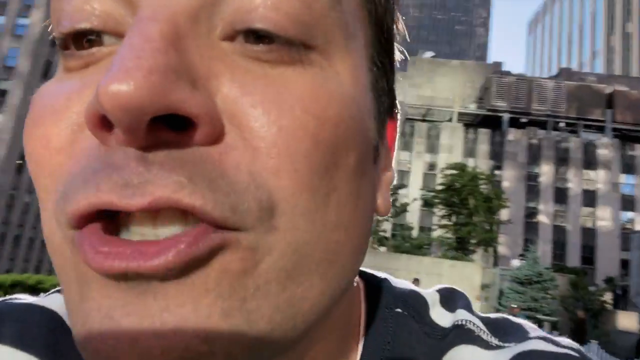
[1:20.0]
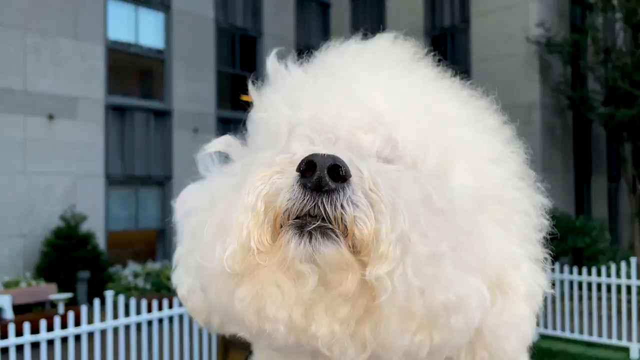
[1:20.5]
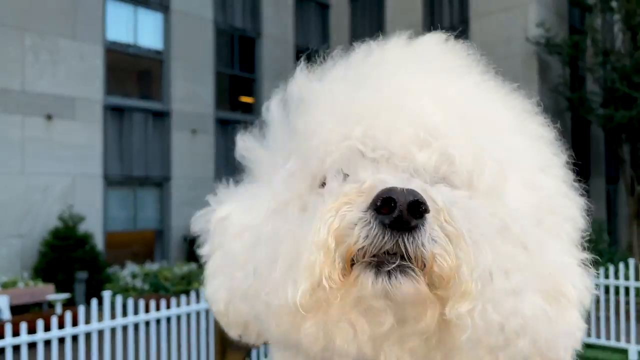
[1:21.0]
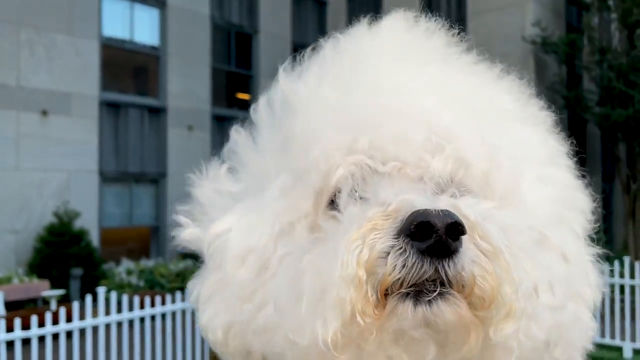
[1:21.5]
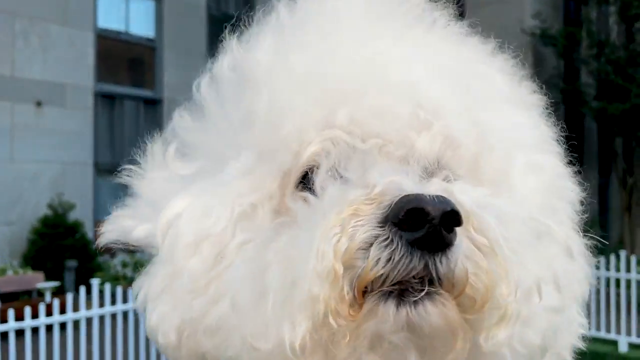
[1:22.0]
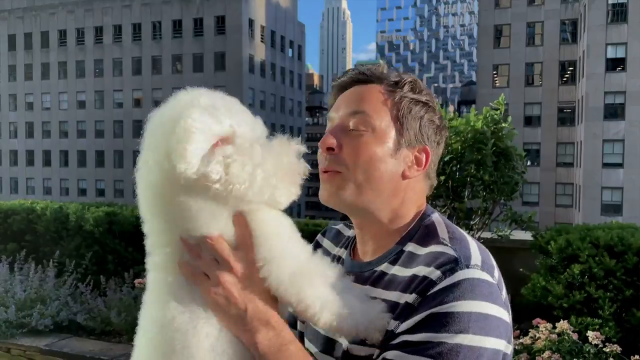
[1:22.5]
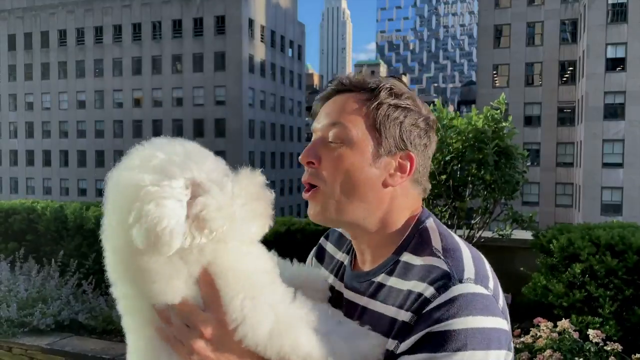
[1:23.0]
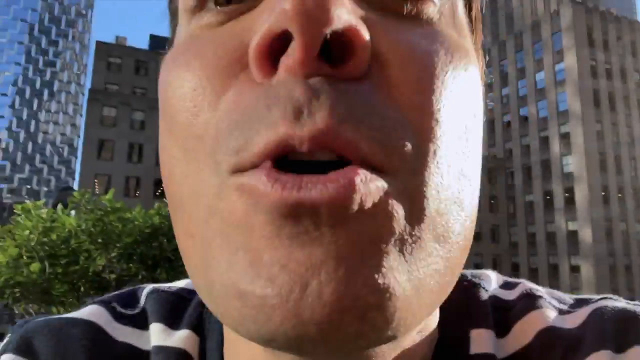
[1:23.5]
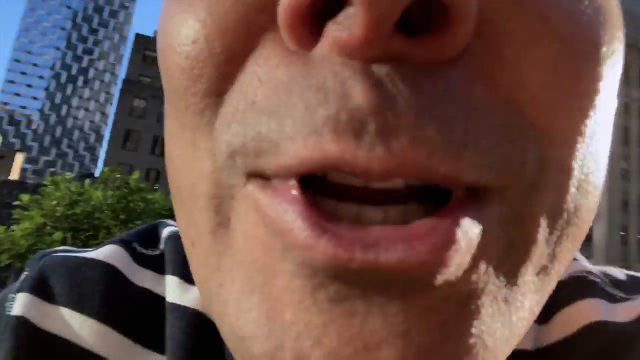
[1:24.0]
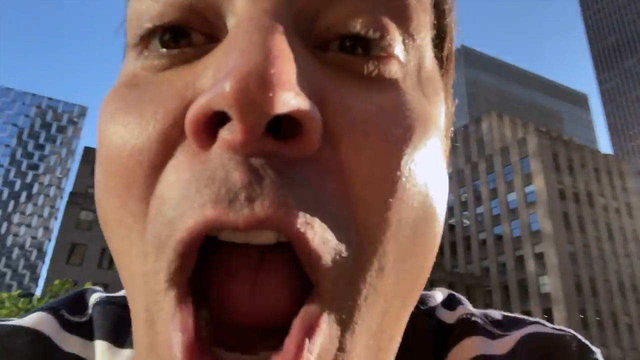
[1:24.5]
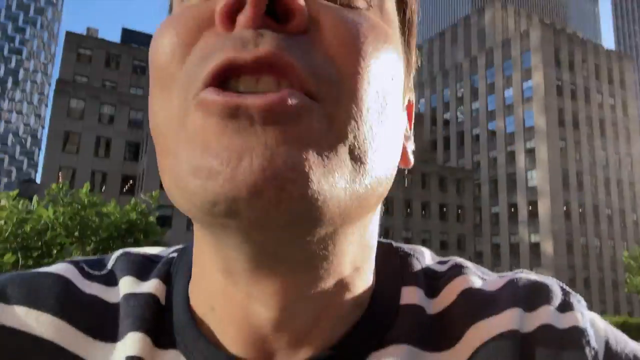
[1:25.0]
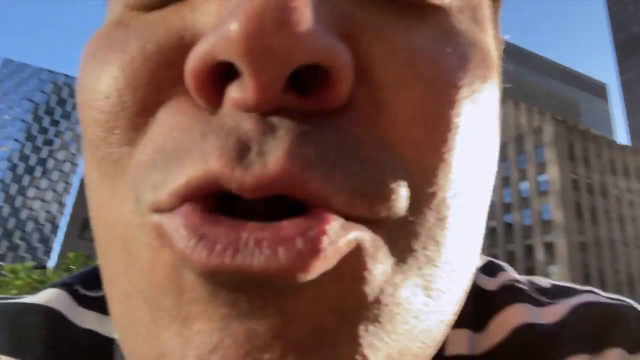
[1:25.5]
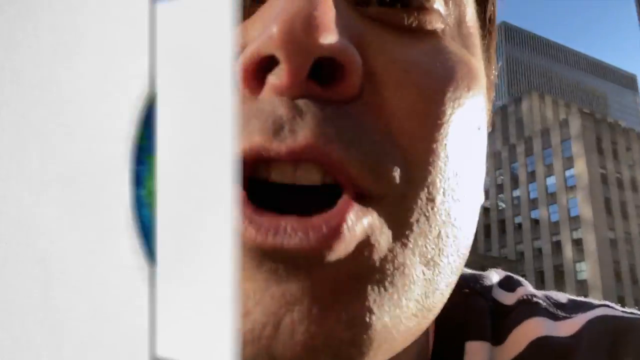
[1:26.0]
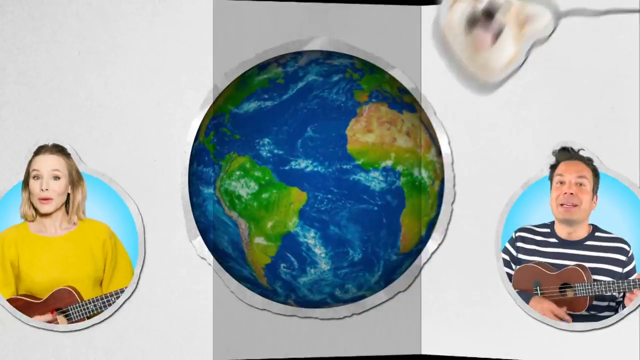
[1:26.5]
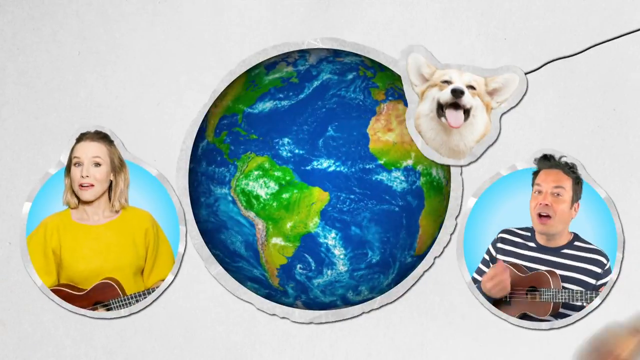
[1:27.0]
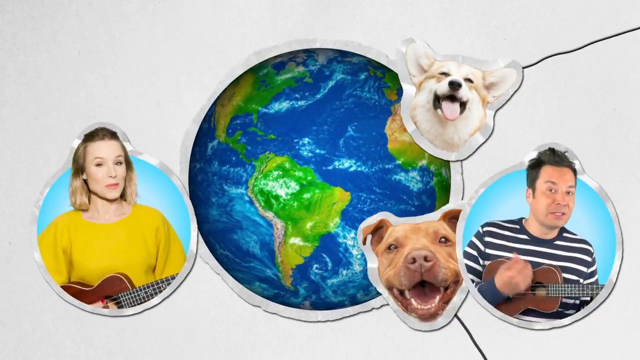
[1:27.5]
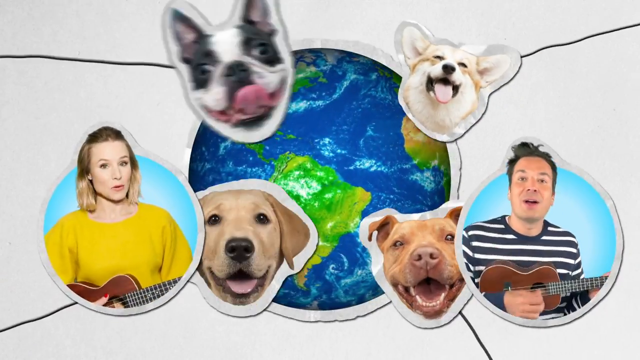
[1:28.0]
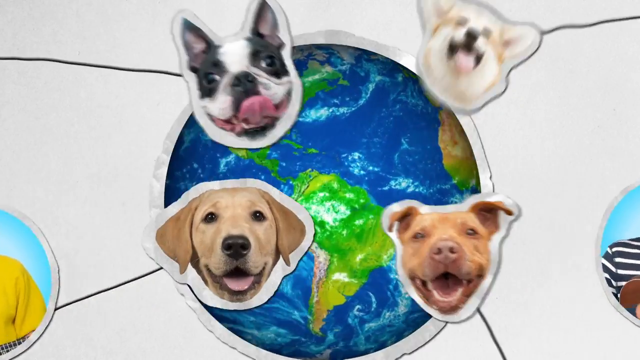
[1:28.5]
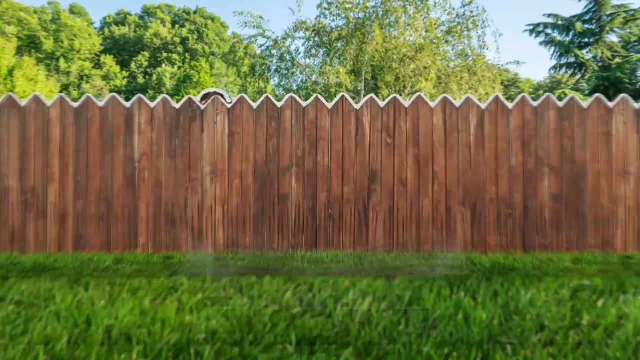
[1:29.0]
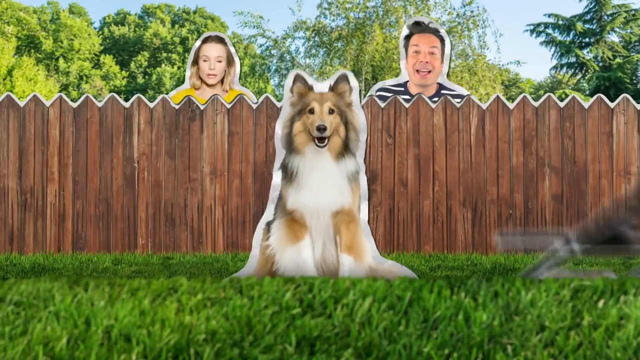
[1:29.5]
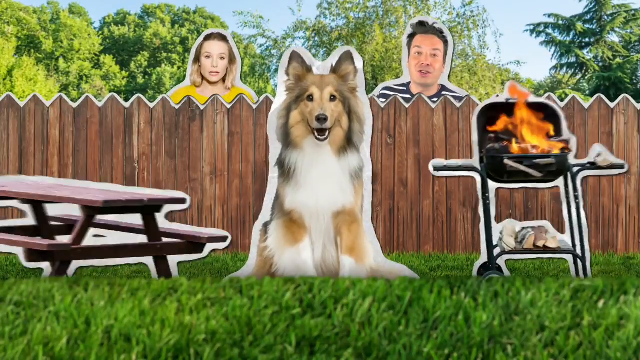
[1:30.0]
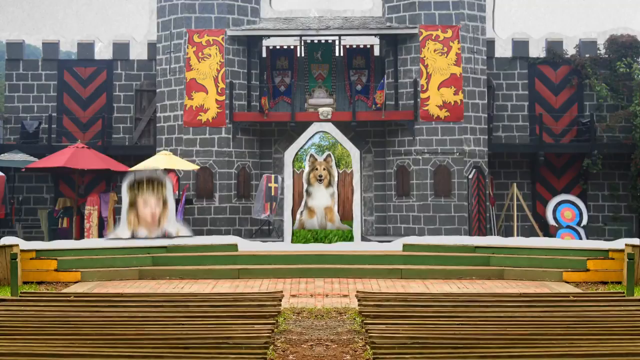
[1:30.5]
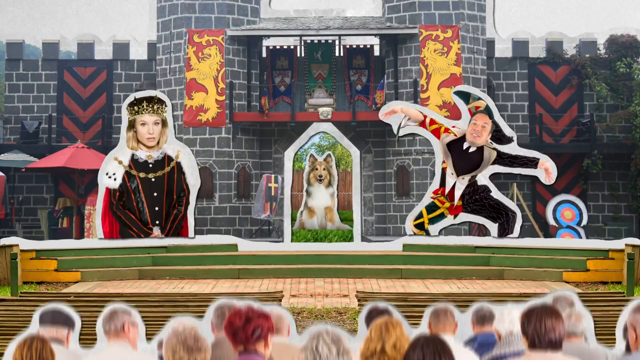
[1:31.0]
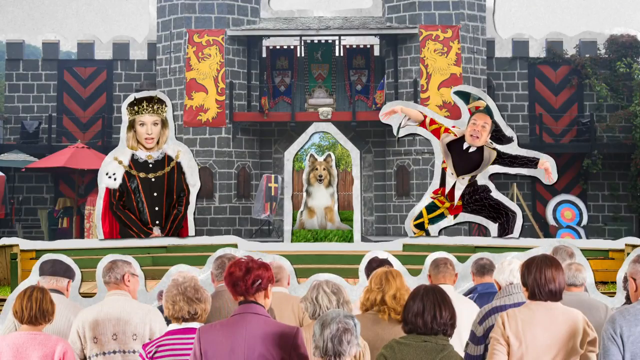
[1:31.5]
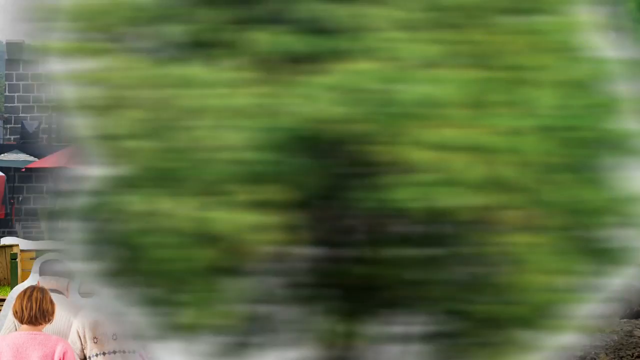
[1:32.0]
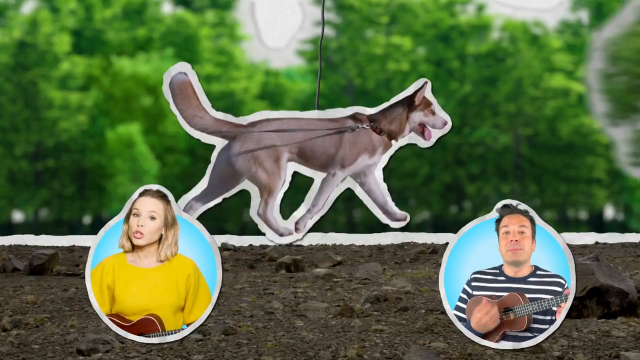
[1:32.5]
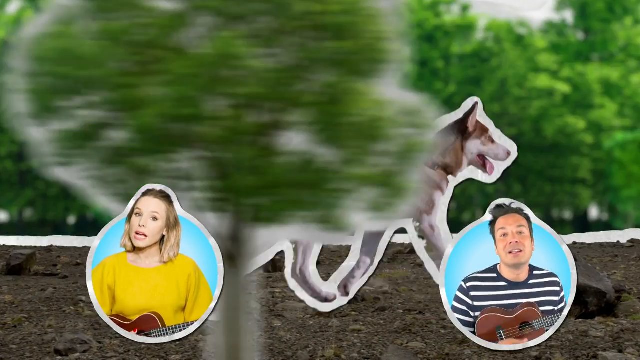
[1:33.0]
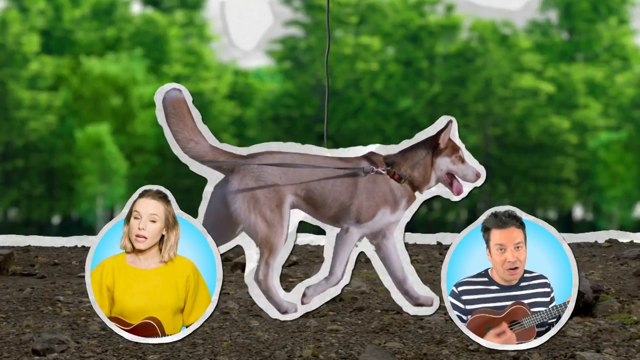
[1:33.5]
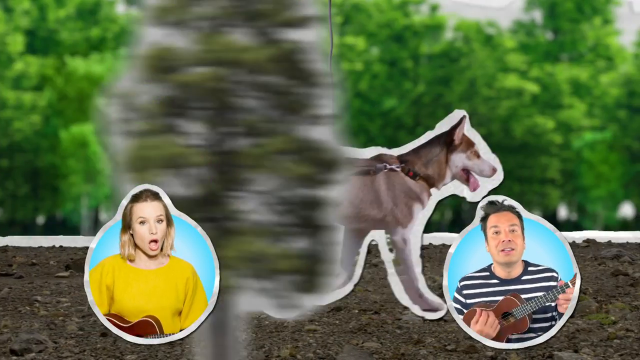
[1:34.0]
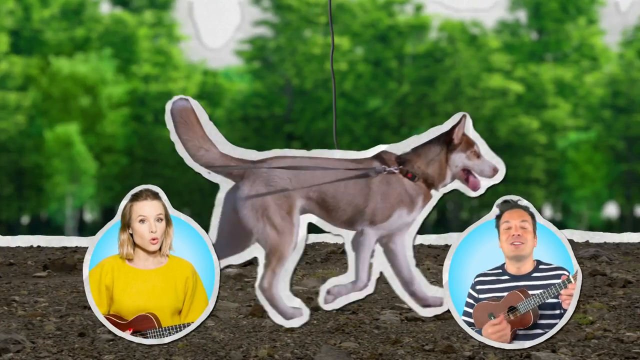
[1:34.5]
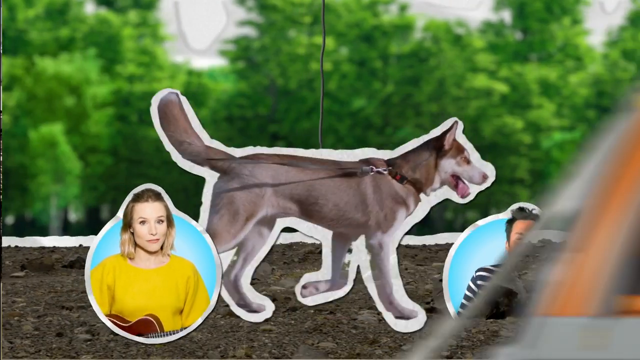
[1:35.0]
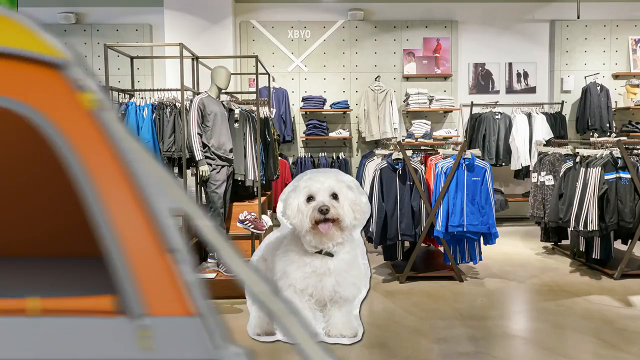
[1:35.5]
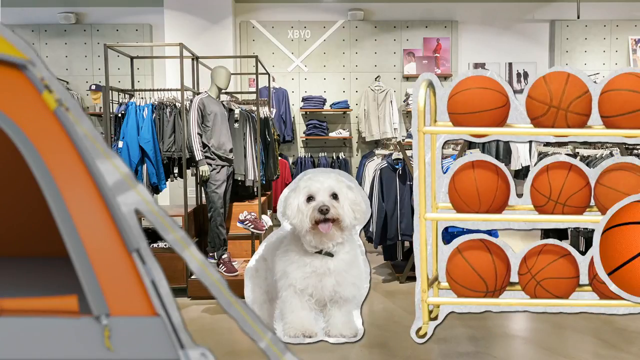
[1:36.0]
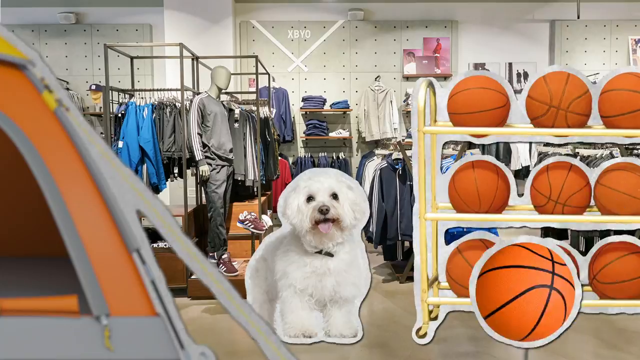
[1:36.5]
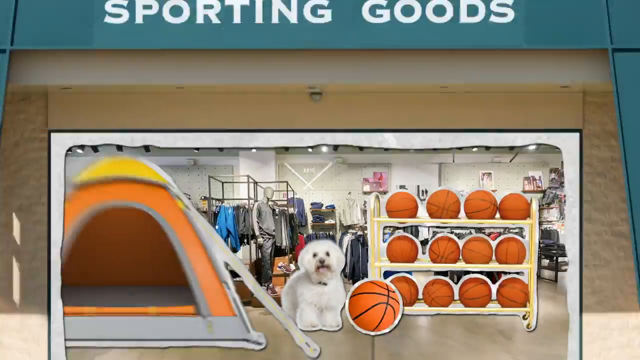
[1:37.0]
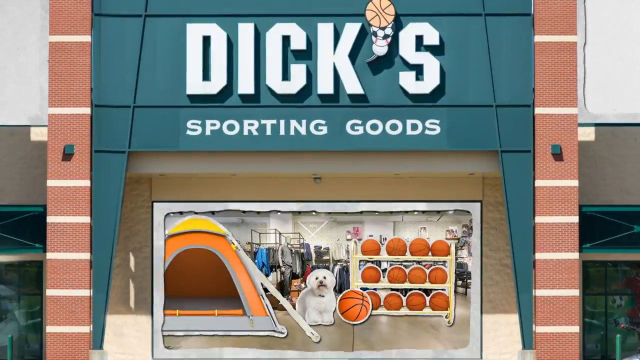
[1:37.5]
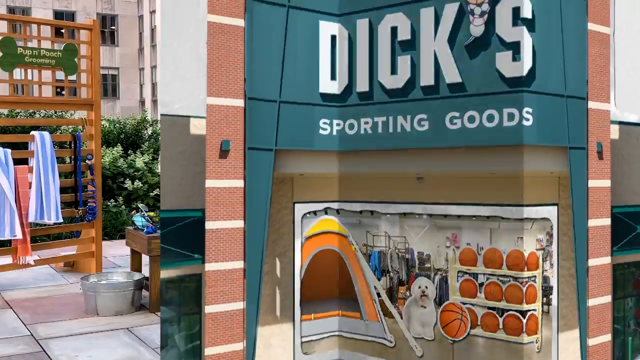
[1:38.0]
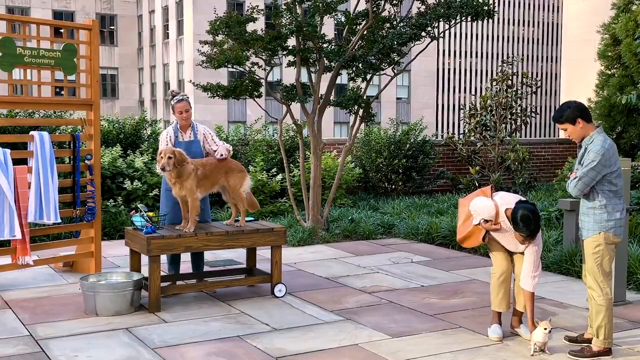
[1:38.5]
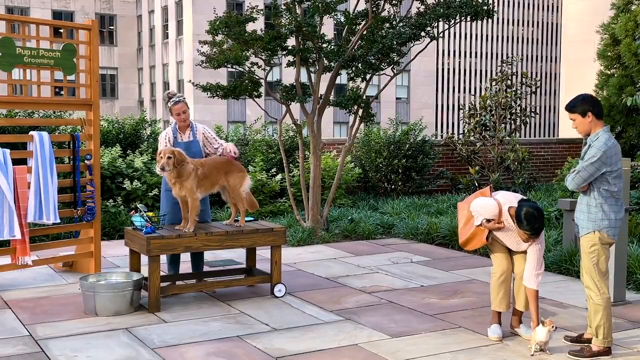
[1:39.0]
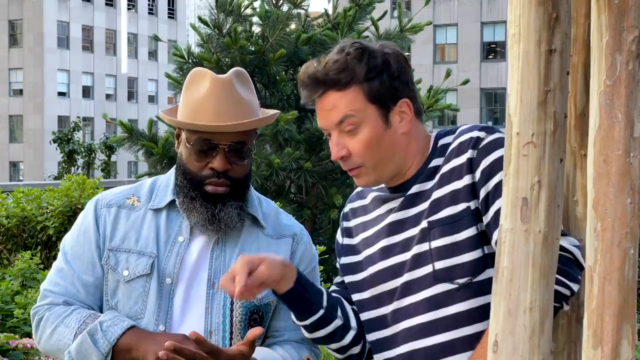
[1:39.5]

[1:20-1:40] The man stands at the dog park, having picked up a little white fuzzy dog, and holds it up, talking to it and loving on it; the dog looks happy. The screen shifts to what looks like a computer screen with a picture of the world in the middle. A circle on the left side of the world shows the woman in the yellow sweater playing a guitar, and a circle on the right side shows the same man in the blue and white striped shirt playing what looks like a little ukulele. A couple of pictures of dog heads appear: one apparently a white head with a little brown under the eyes, the other a brown dog, and then a couple of other dog heads pop up. The screen shifts to a dog park, where the man and the woman look over a wooden fence into the park. A big Lassie-type dog sits in the grass, with a wooden picnic table to its left and a barbecue to its right that is already going, with a flame in it. The video then goes to another scene, seemingly with the dog as the picture in the middle and the man and the woman in the background as a queen and king, with a play going on.